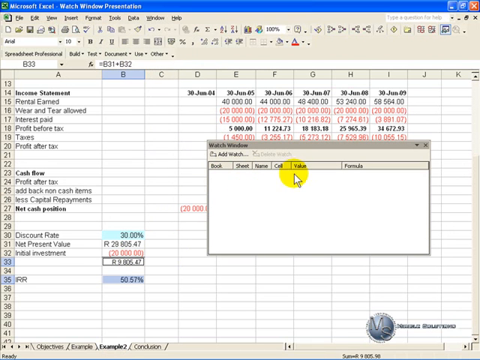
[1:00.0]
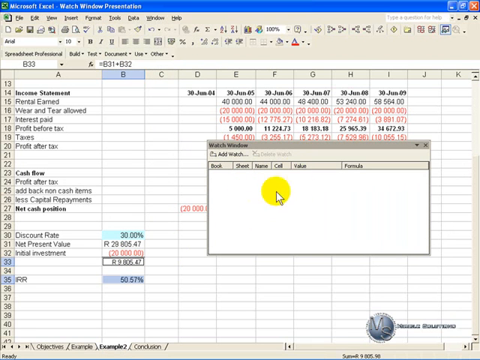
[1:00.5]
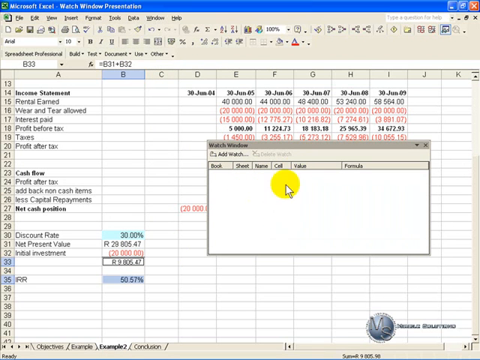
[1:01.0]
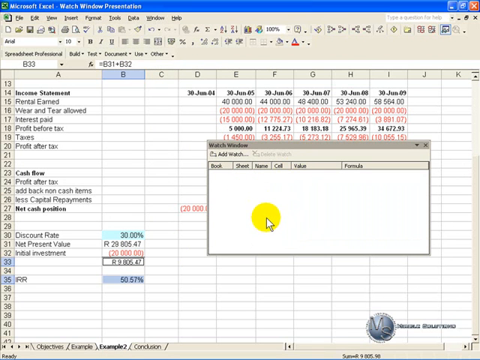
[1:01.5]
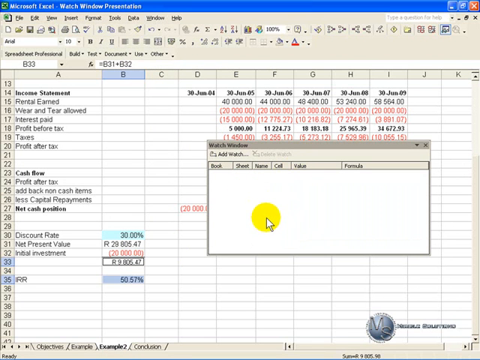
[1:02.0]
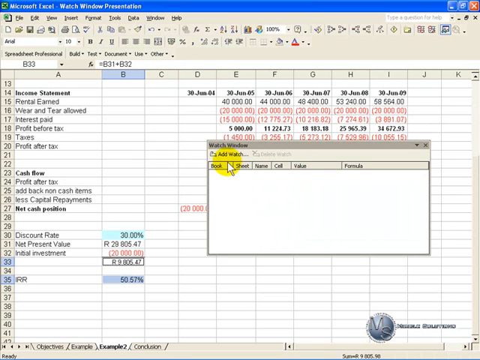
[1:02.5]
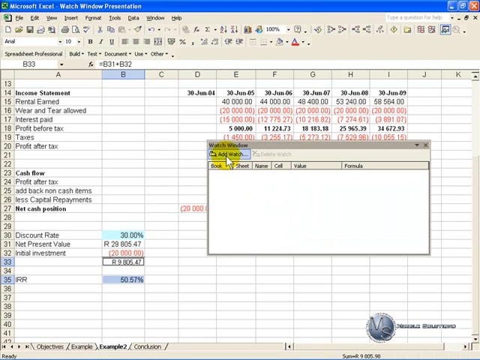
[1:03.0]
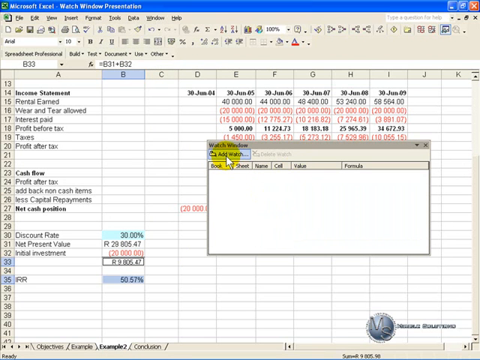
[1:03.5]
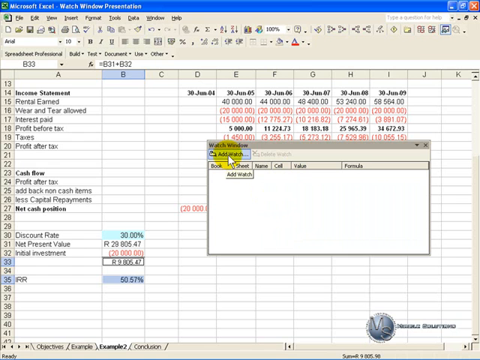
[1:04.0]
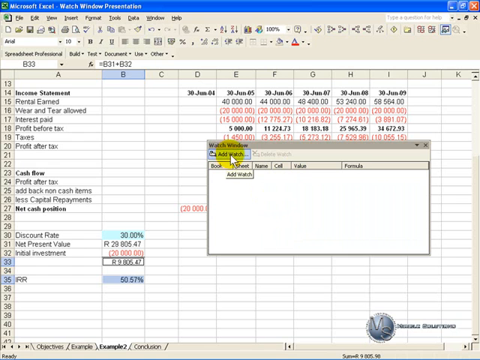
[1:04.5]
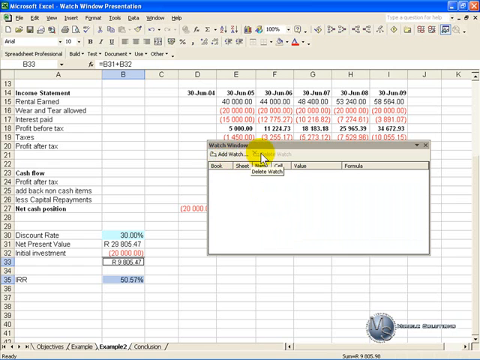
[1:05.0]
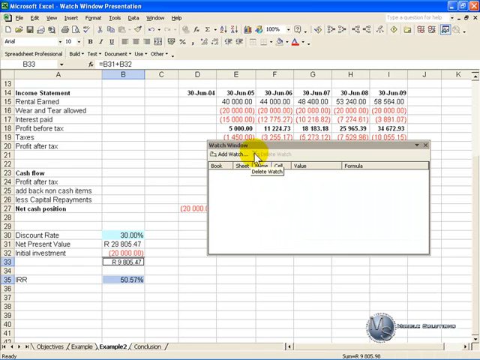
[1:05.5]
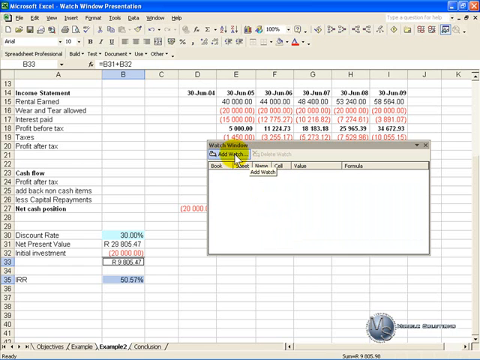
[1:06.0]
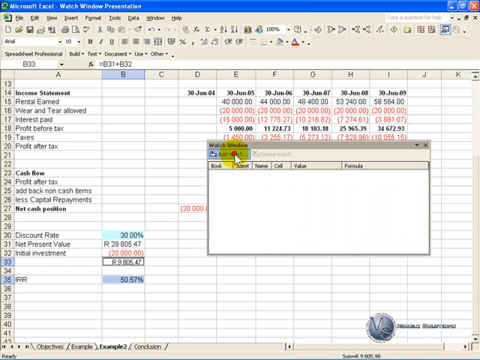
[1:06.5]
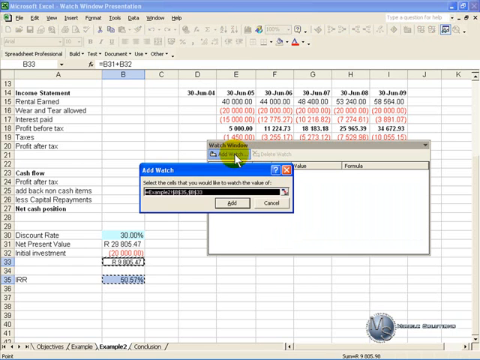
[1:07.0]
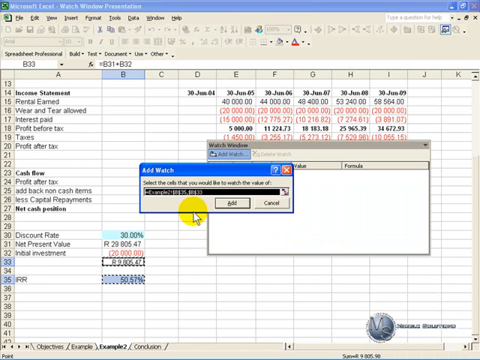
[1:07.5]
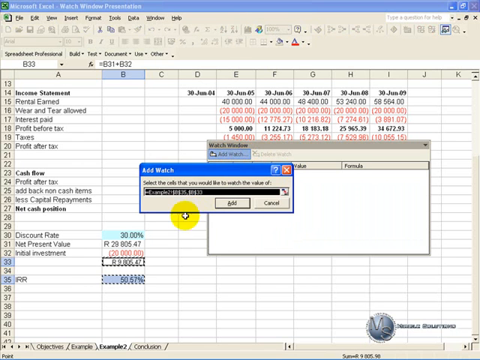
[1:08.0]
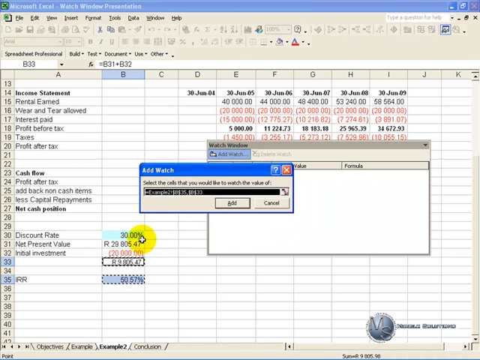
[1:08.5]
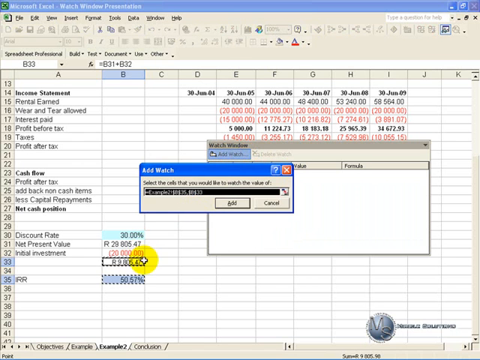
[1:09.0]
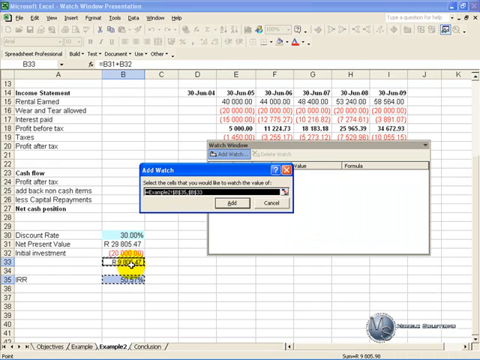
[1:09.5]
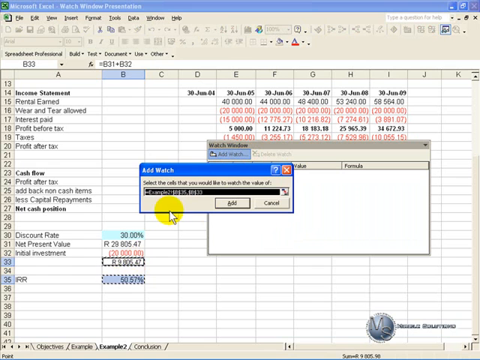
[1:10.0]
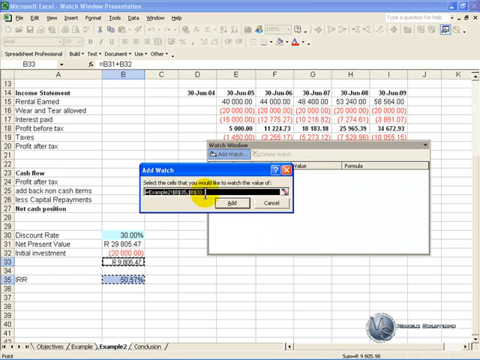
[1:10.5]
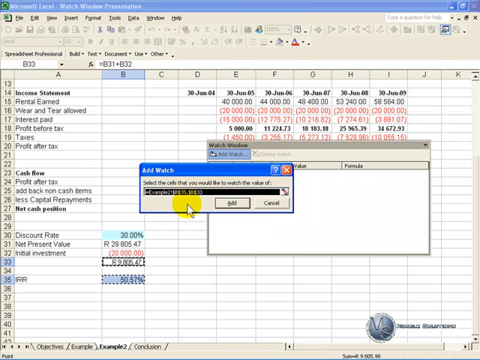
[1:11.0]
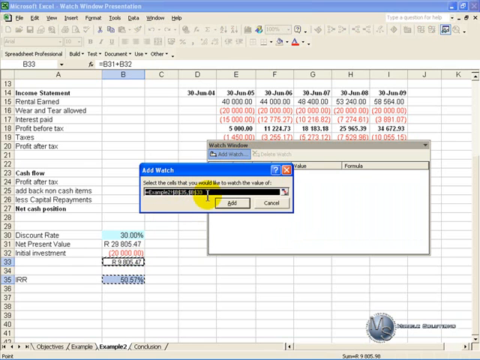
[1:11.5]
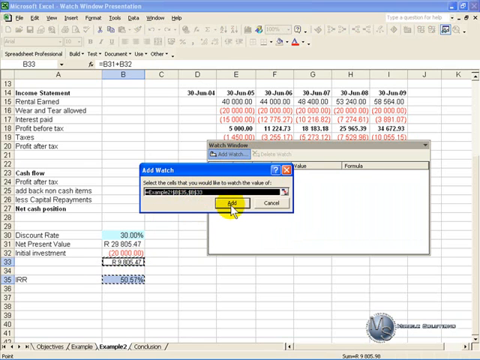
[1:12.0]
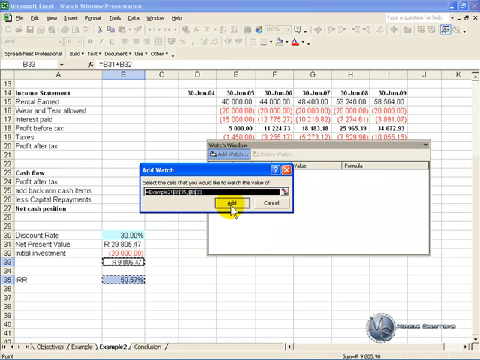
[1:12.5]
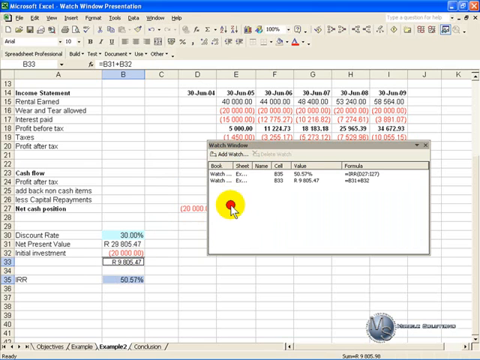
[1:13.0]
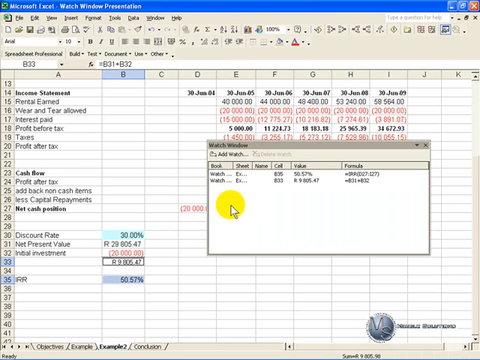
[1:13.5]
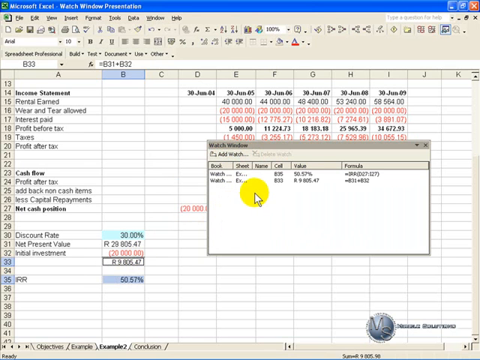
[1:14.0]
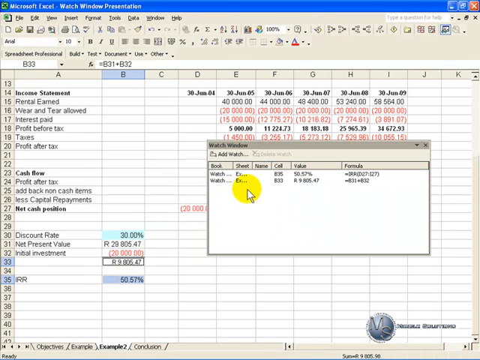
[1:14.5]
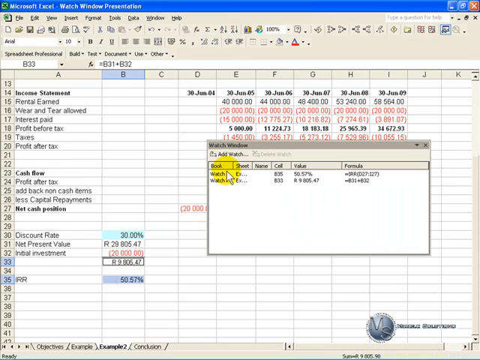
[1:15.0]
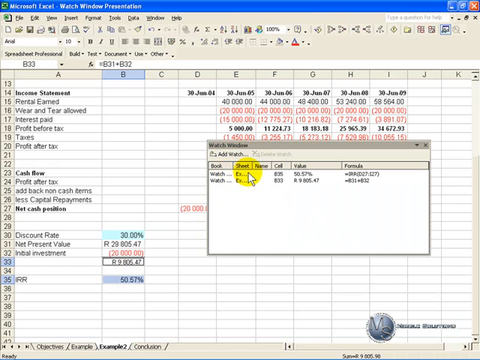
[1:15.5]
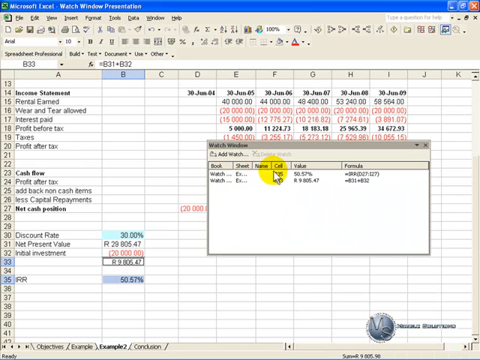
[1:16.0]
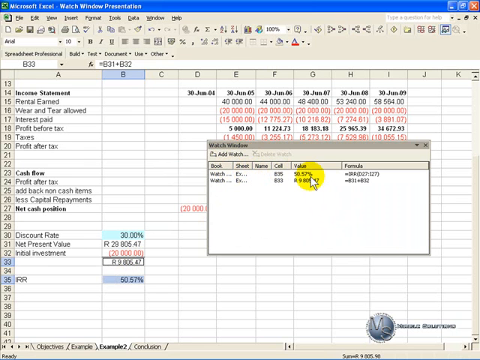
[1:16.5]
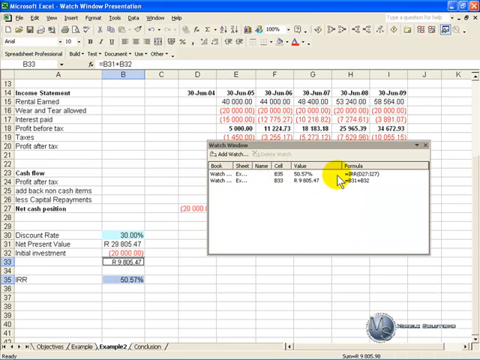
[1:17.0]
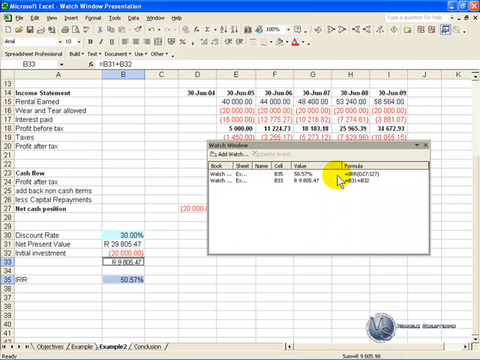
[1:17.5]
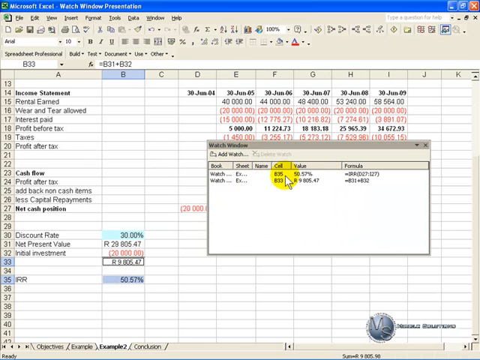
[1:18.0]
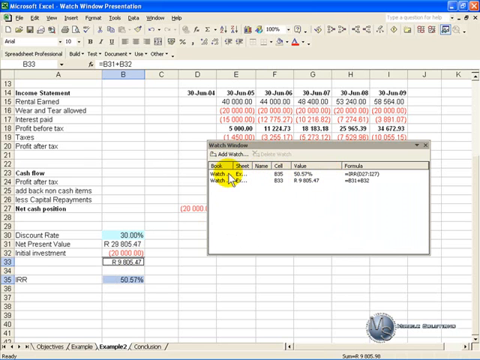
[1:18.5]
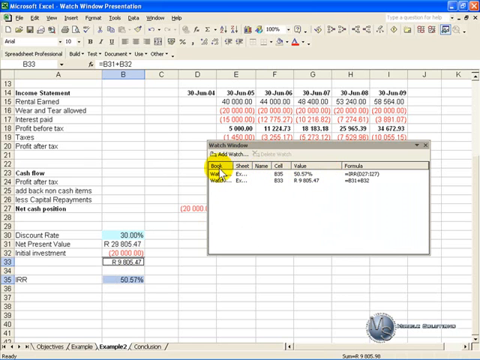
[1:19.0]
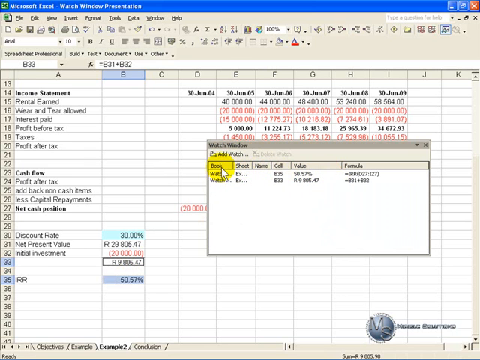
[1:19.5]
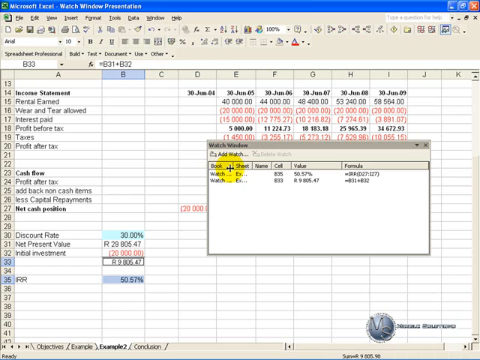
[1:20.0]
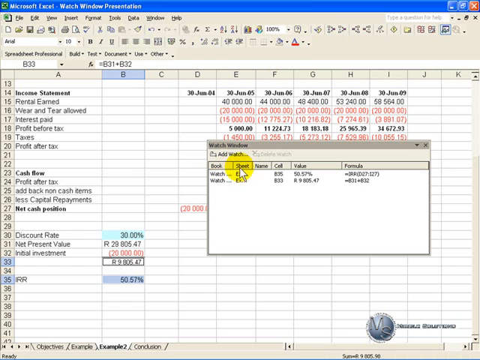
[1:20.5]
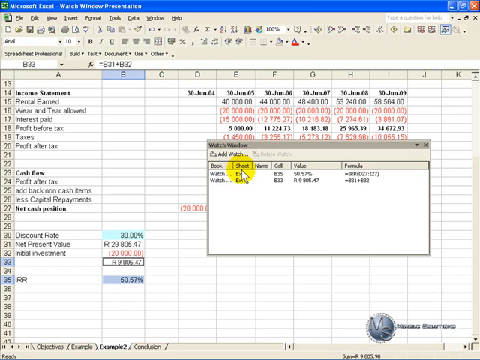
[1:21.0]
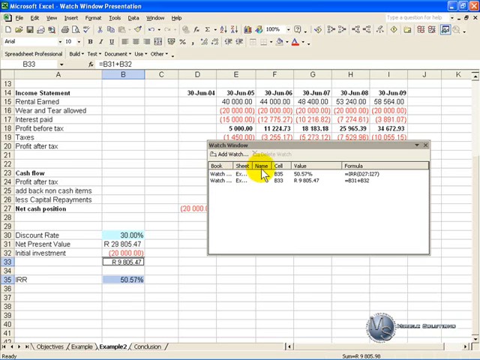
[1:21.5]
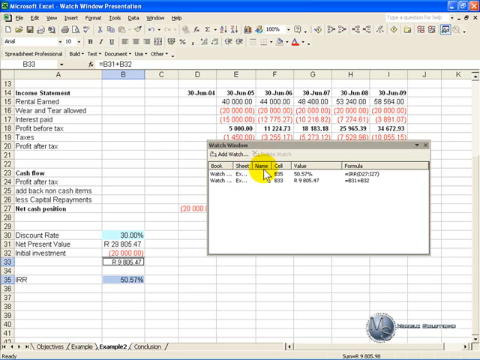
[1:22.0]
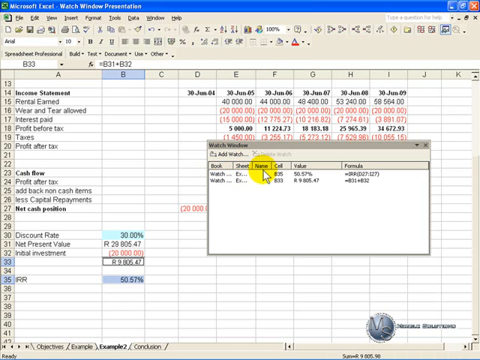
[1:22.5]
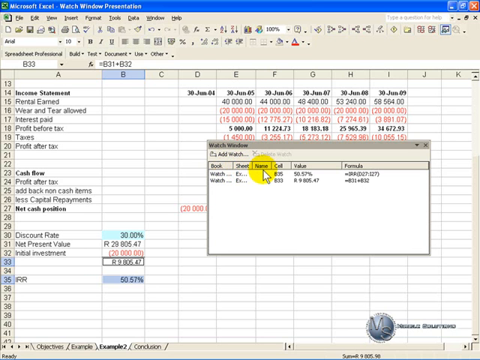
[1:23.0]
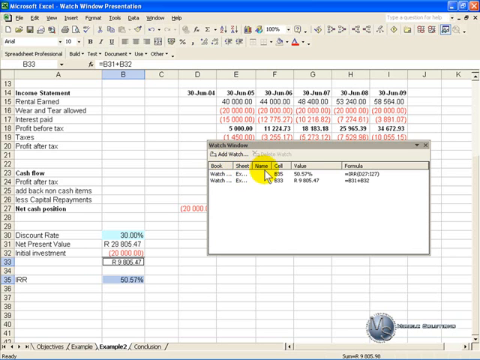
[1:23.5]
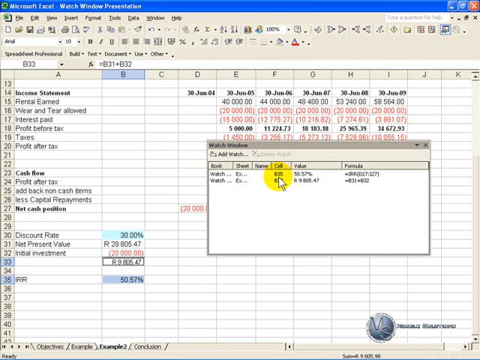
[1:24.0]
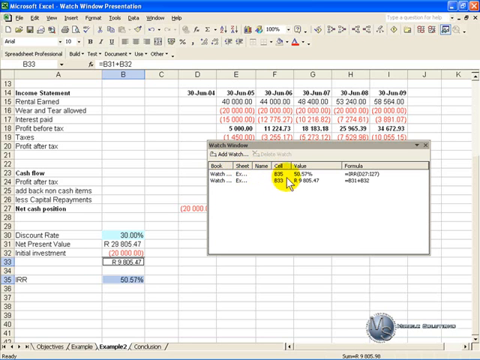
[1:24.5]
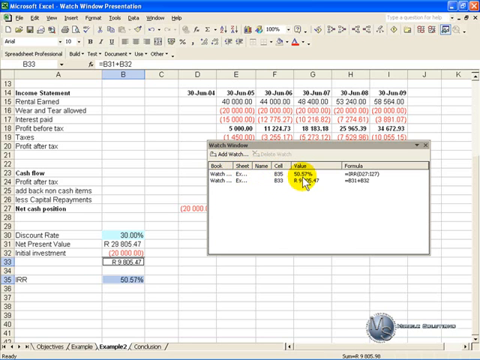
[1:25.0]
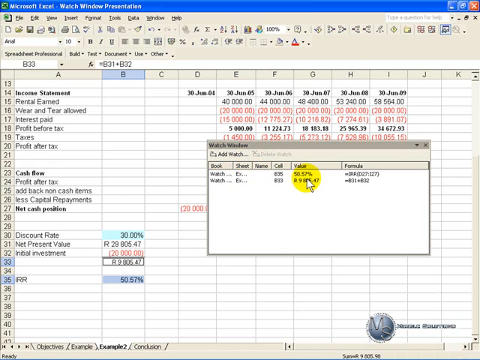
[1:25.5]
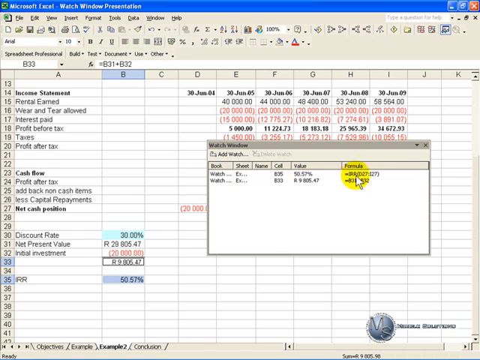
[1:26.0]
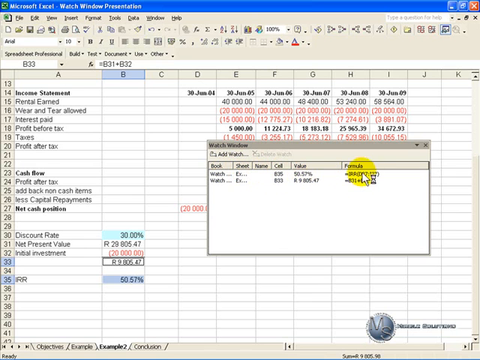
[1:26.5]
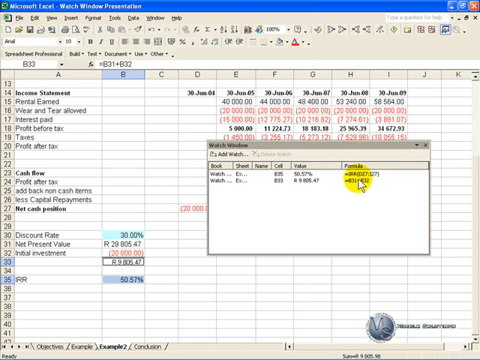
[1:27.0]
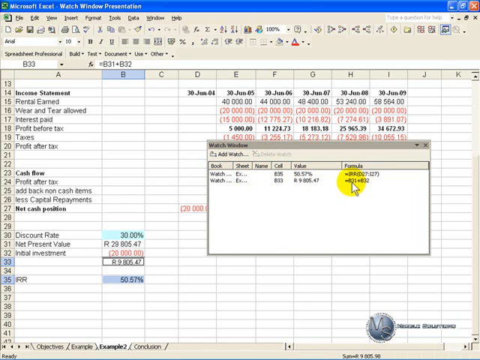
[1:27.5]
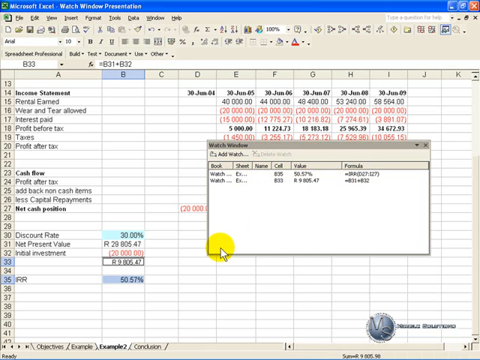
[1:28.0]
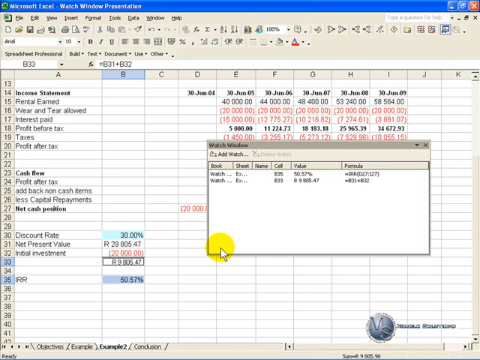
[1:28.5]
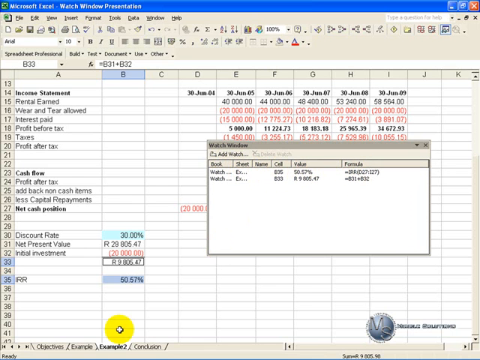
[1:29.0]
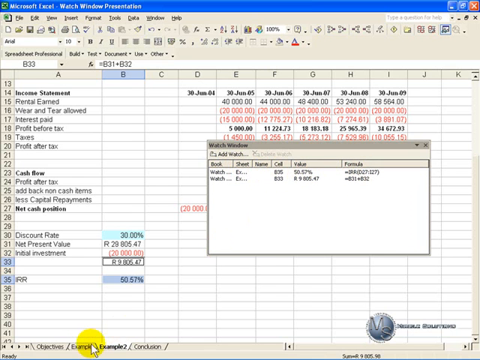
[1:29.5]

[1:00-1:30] The mouse moves back and forth over the small window labeled "watch window." It hovers over an "add watch" button and then clicks it, opening another window that says "add watch" and "select the cells you would like to watch the value of," with a black input bar, an "add" button and a "cancel" button. The mouse hovers over B33, kind of hovers over the input box, and clicks add, so B33 is added to the watch window. Information about the cell then appears in the watch window, which shows two cells being watched, with columns for book, sheet, name, cell, value and formula. The mouse goes back down and again clicks the "example" tab at the bottom of the screen.